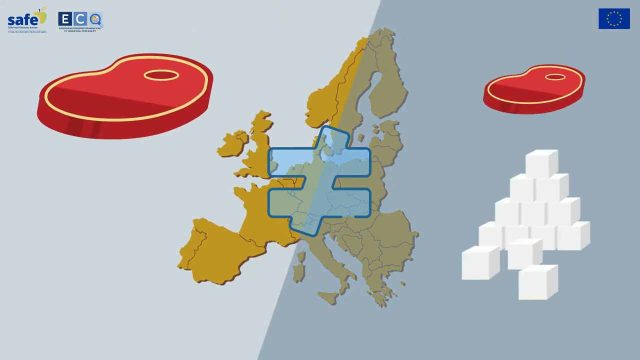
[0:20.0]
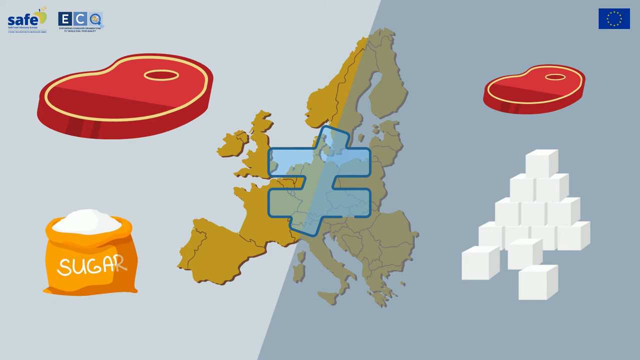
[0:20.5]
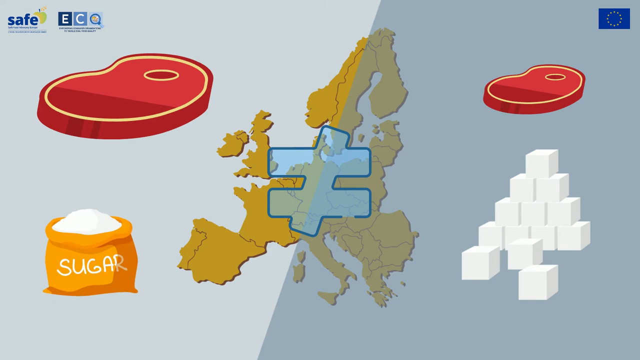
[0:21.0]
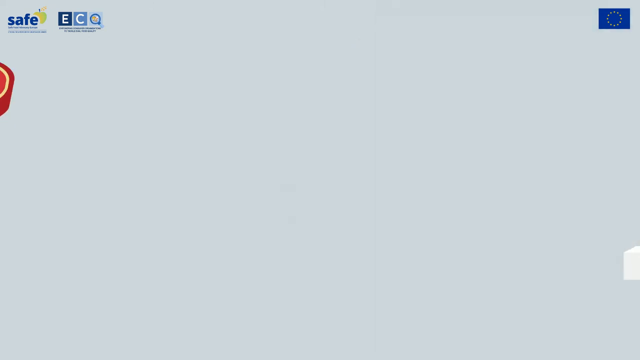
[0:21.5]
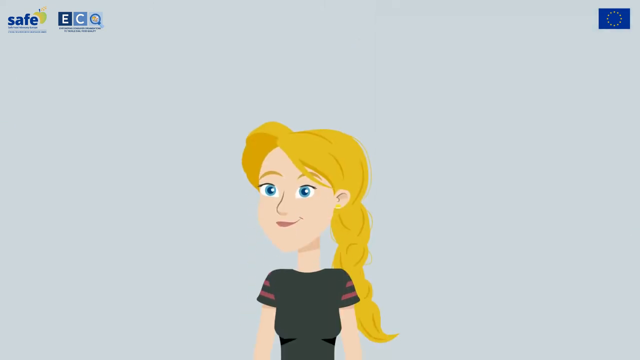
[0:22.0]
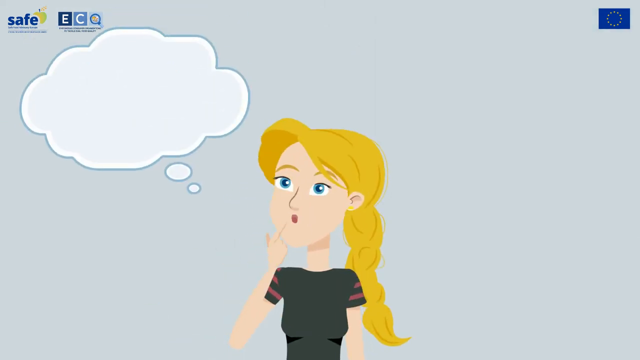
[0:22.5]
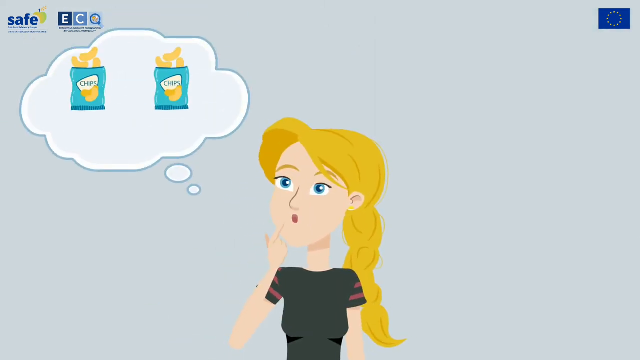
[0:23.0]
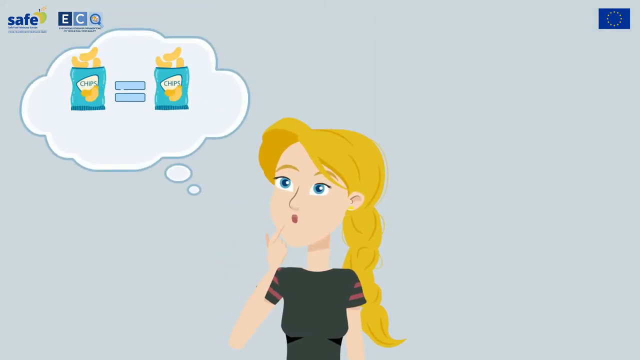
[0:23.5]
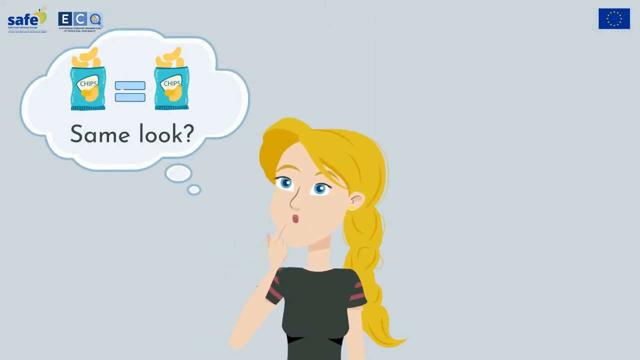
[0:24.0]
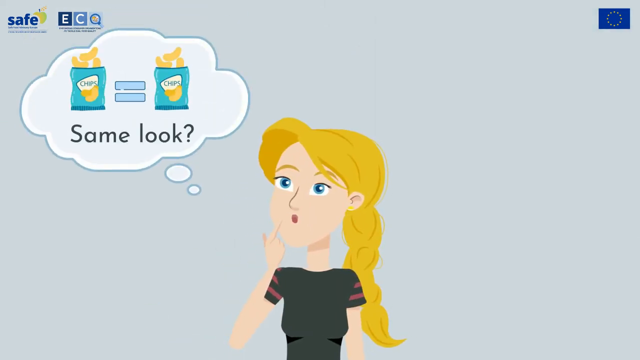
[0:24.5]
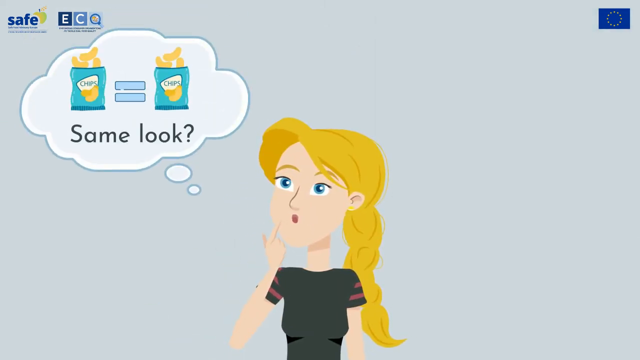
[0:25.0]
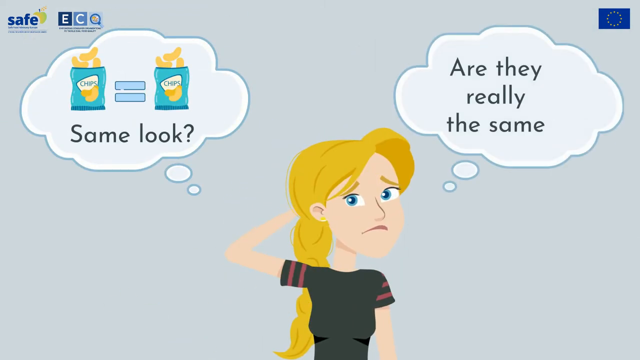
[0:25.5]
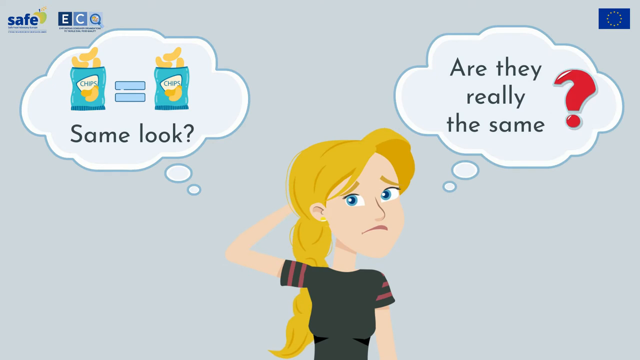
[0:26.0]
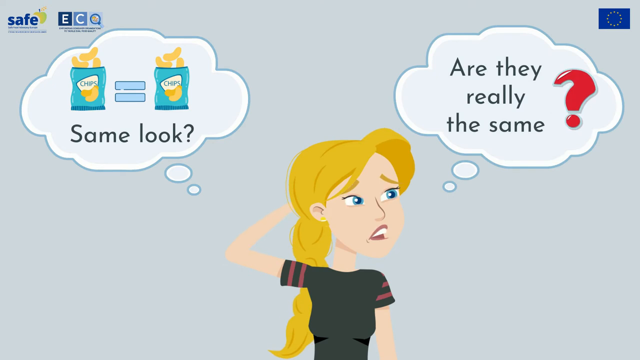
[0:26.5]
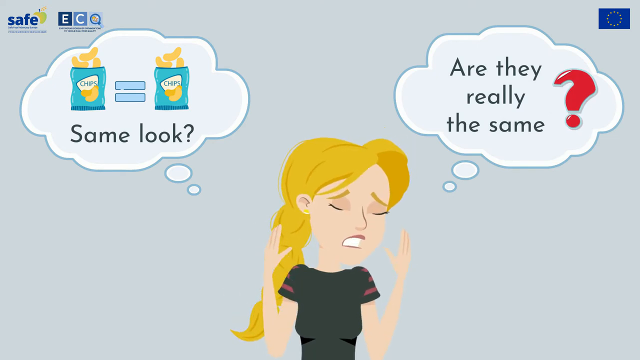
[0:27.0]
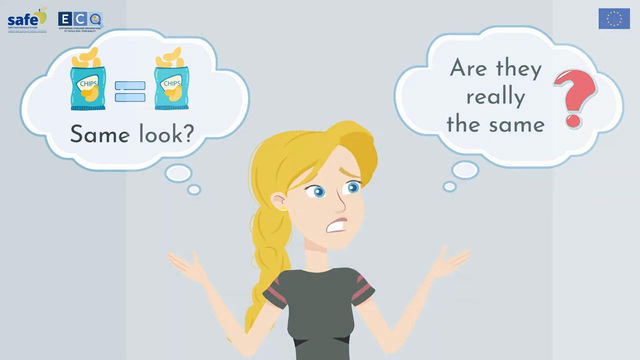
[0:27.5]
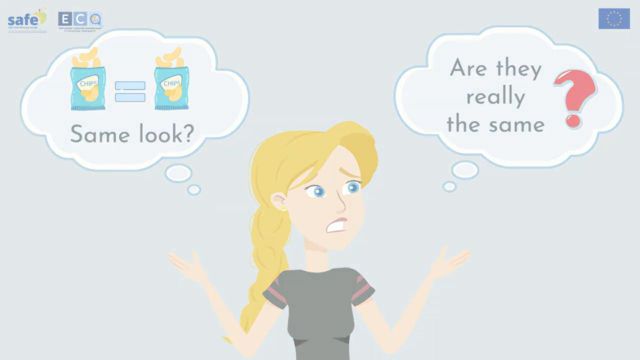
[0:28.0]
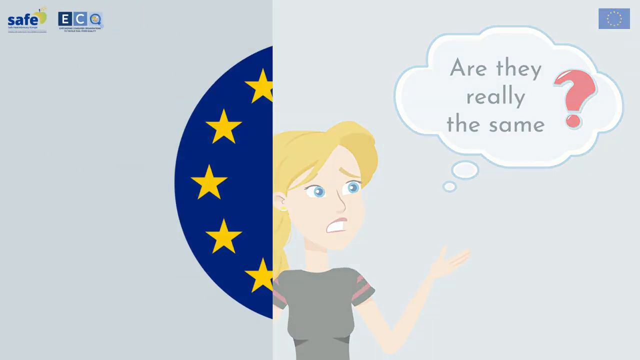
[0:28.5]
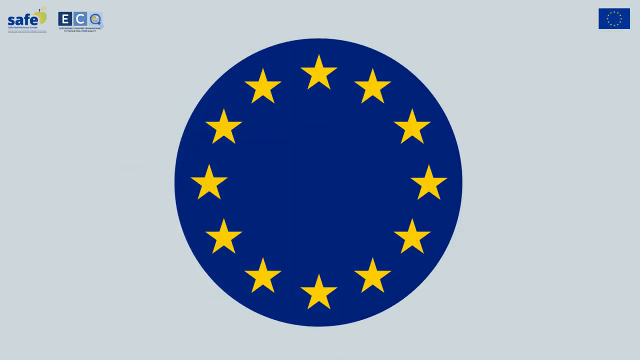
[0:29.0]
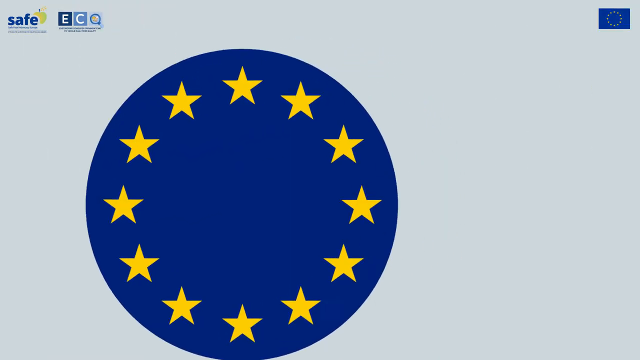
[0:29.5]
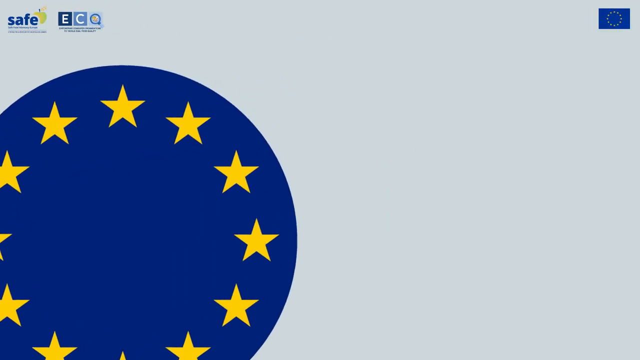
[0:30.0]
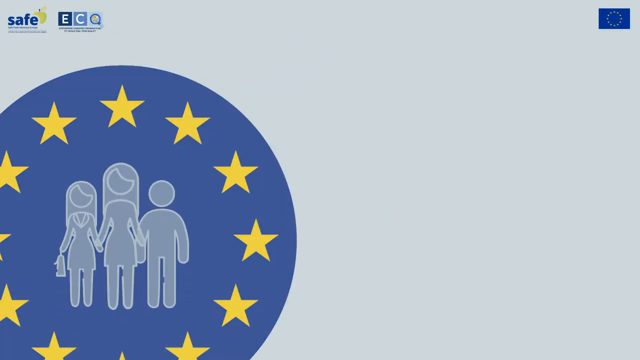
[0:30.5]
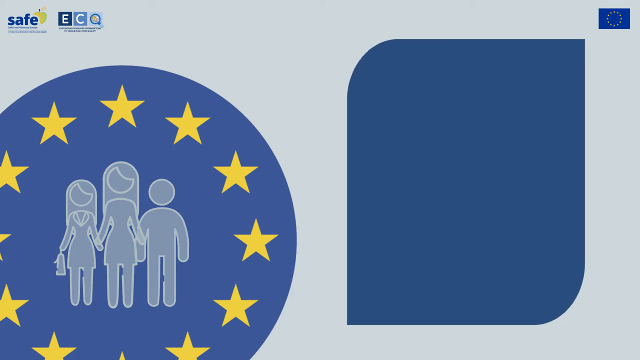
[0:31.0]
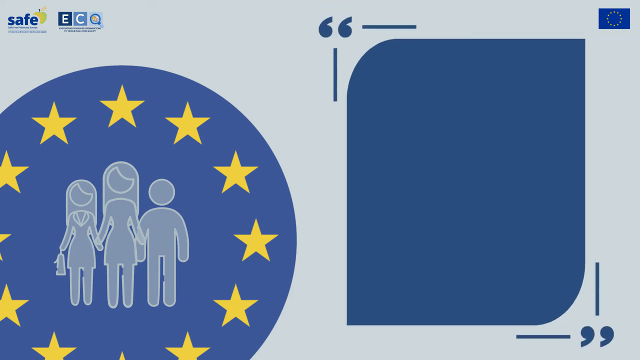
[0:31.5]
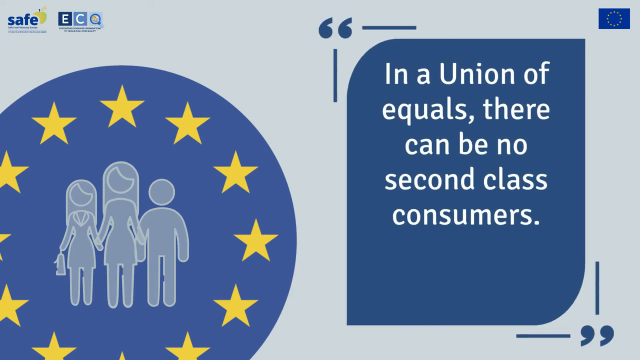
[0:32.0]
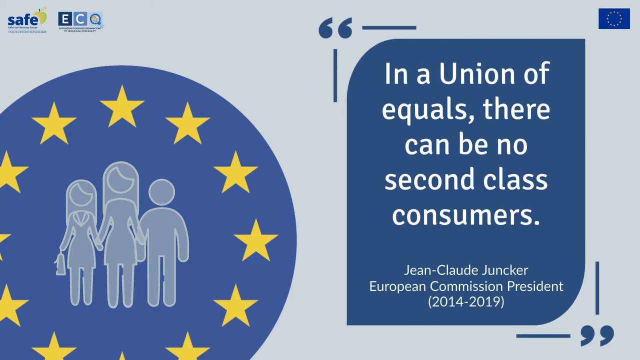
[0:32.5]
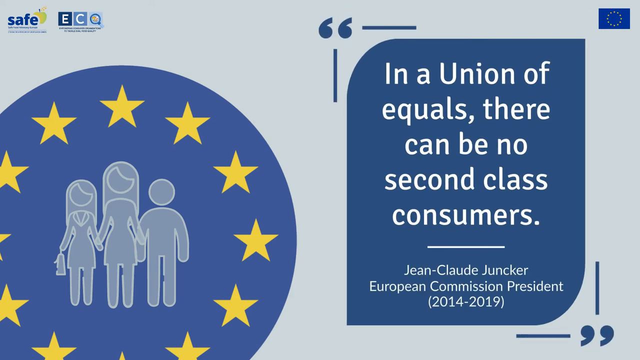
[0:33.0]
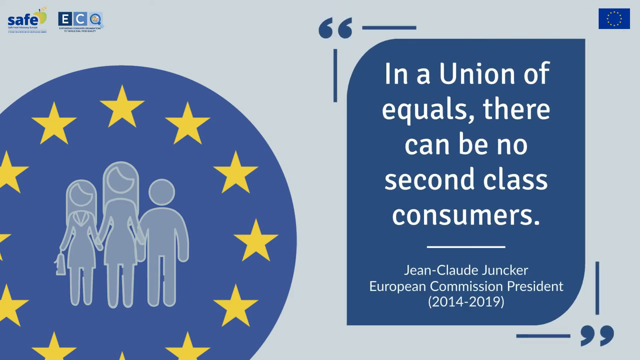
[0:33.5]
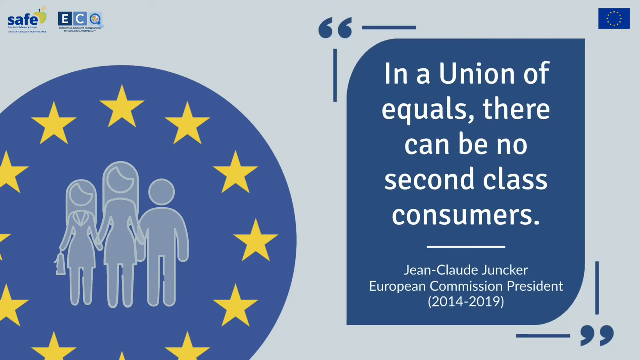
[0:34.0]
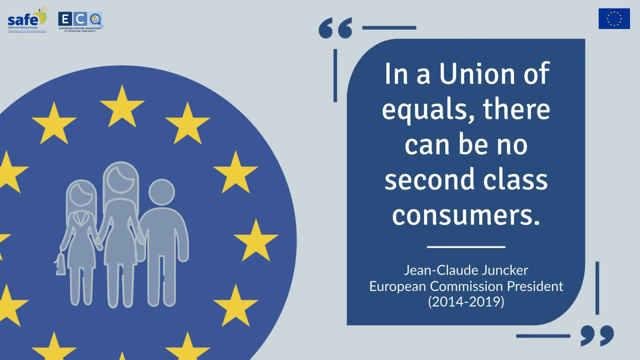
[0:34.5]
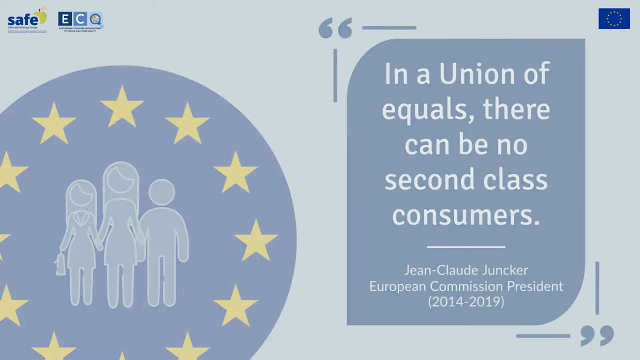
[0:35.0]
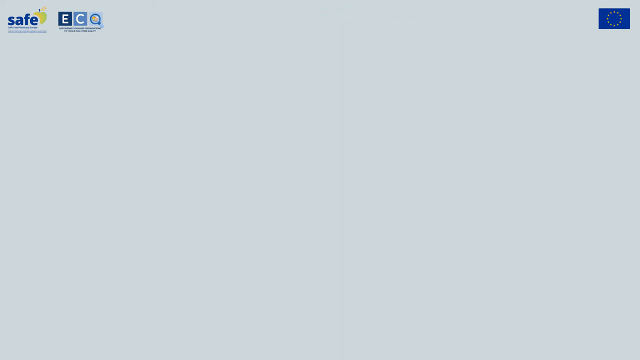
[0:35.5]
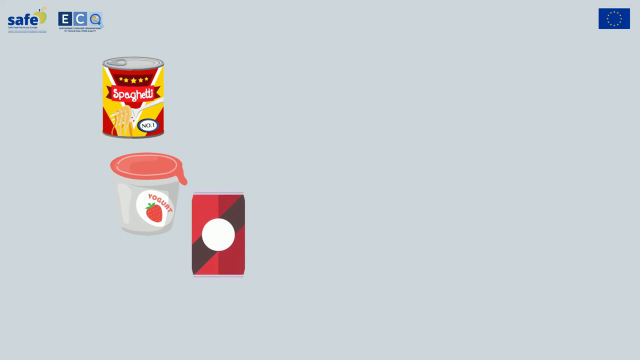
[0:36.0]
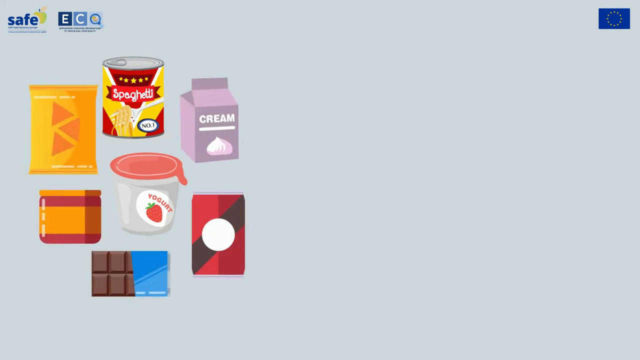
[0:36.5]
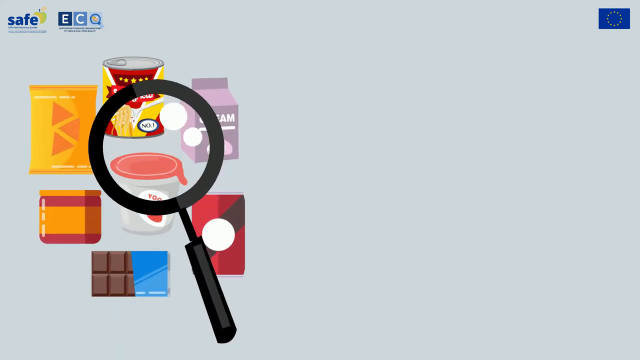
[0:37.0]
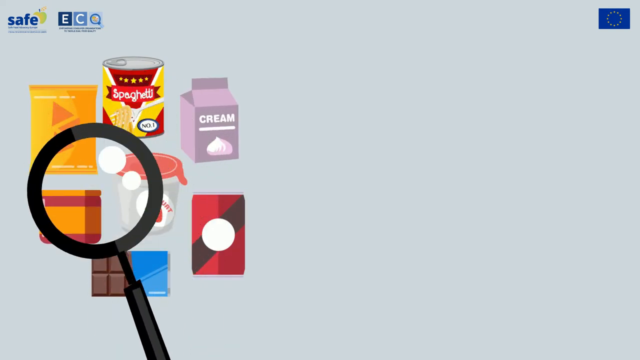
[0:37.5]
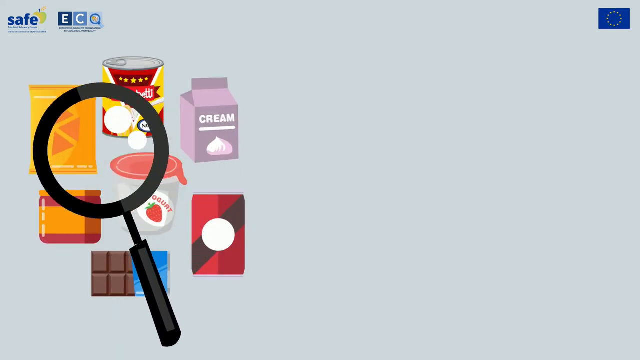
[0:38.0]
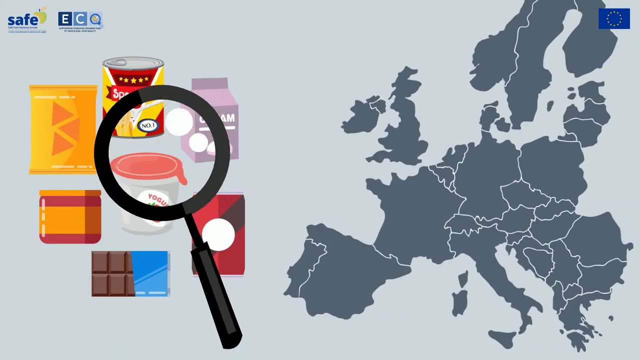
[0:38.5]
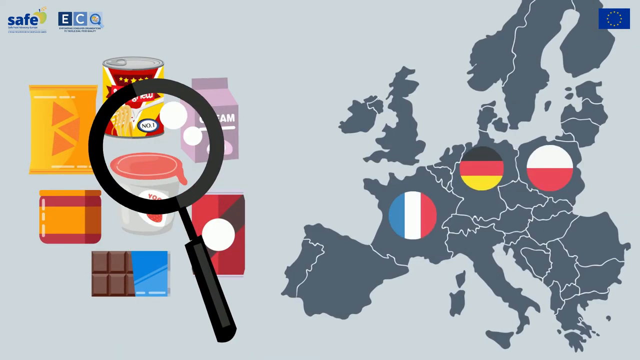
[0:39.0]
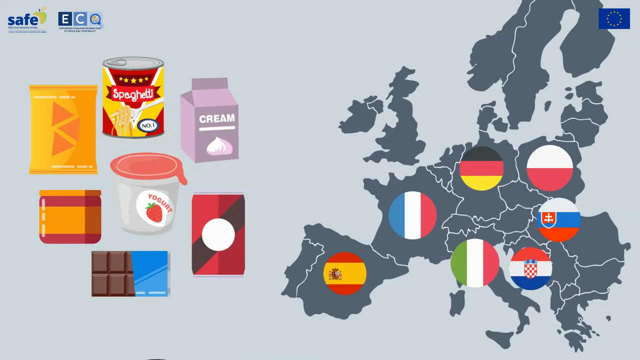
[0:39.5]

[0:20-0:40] A picture of a bigger steak is on the left side and a smaller steak on the right side, with an equal sign with a slash through it in the middle and a yellow map in the background. To the right there appear to be white boxes stacked up under the smaller steak. A picture of sugar pops up in a yellowish brown bag with white sugar on top and "sugar" written in white across the middle of the bag. A young white woman with blue eyes and blonde hair braided to the back, wearing a black shirt, pops up. A thinking bubble appears above her head containing two bags of chips with an equal sign between them and the text "same look?", and to the right is "are they really the same" with a red question mark. She has her arm behind her head, looks a bit confused and frowns, then finally shrugs and puts both hands up as if questioning the product. A blue circle outlined with several yellow stars pops up and moves over to the left corner. Then the two young ladies appear, with possibly a young boy to their right, and an upright blue rectangle appears to the right reading "in a union of equals there can be no second-class consumers", with "Jean-Claude Juncker European Commissioner president 2014 to 2019" beneath it. This disappears, and a can of spaghetti outlined in yellow pops up and a red V-shaped mark is made on it. A little tub of strawberry yogurt pops up under this, then other items pop up with a magnifying glass moving over them. A map pops up showing different countries, and the colors of their flags appear.